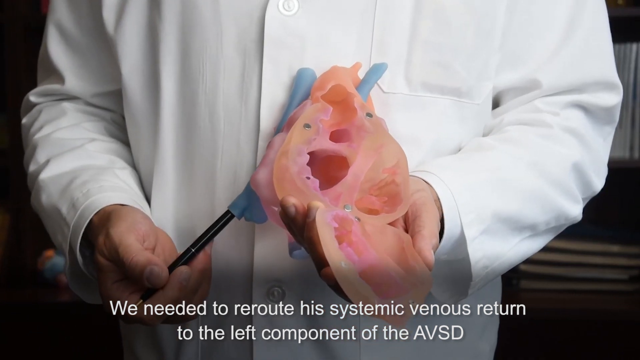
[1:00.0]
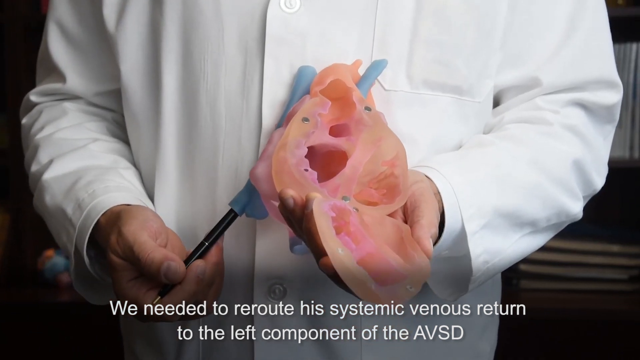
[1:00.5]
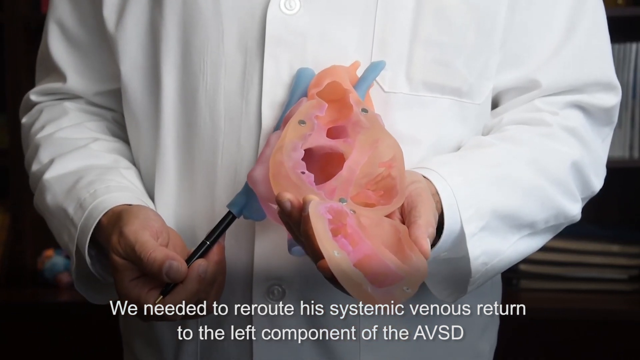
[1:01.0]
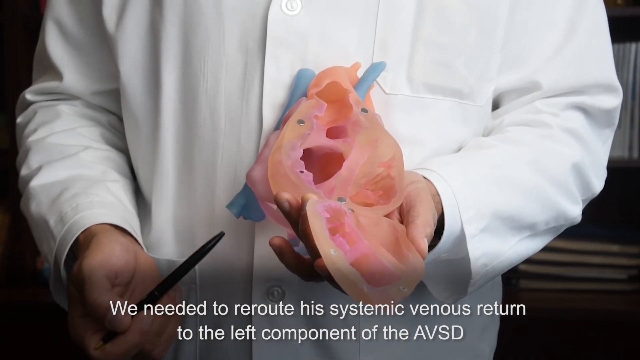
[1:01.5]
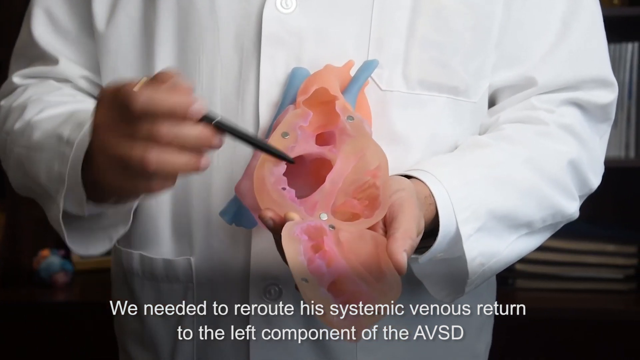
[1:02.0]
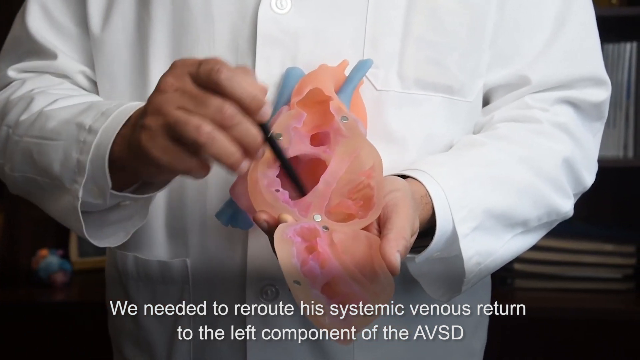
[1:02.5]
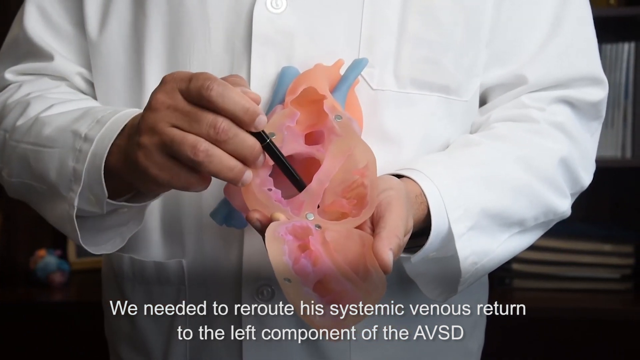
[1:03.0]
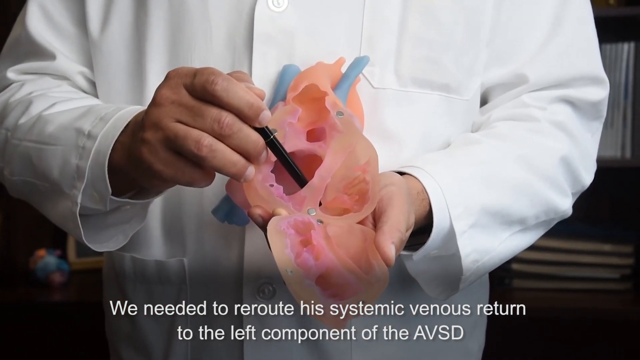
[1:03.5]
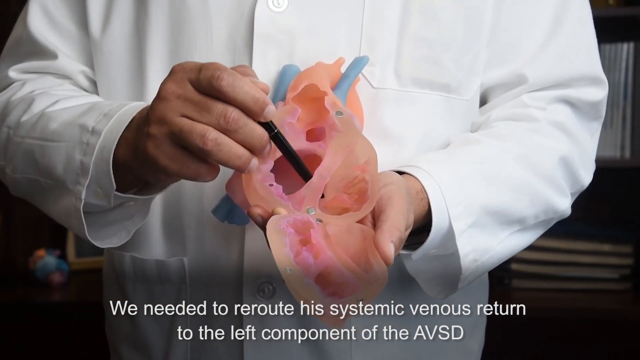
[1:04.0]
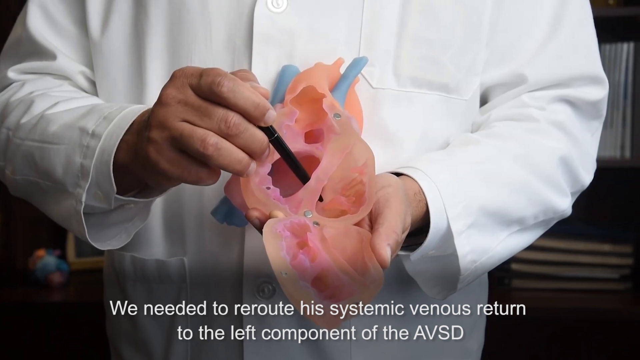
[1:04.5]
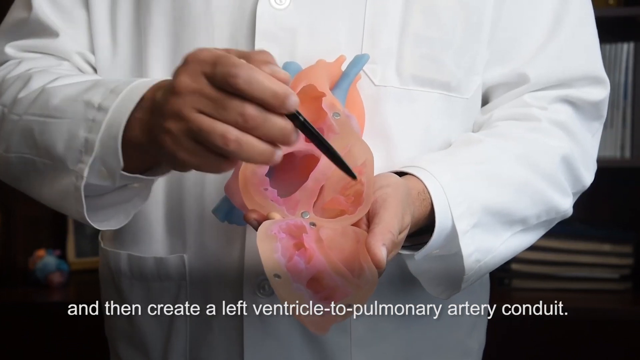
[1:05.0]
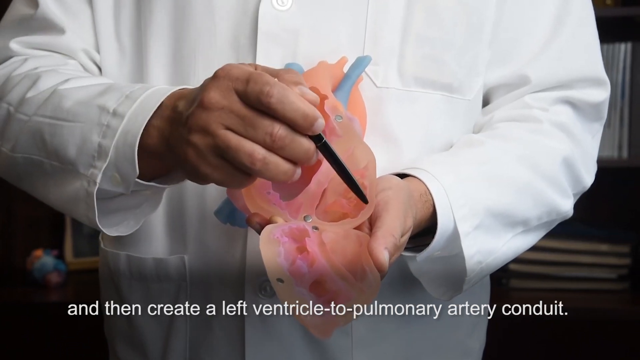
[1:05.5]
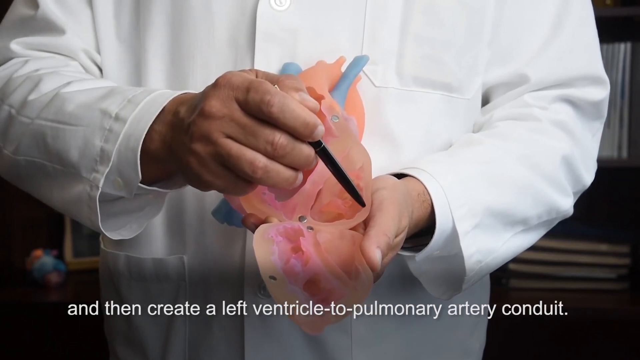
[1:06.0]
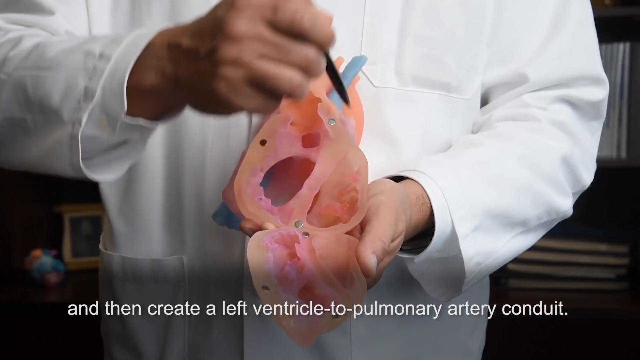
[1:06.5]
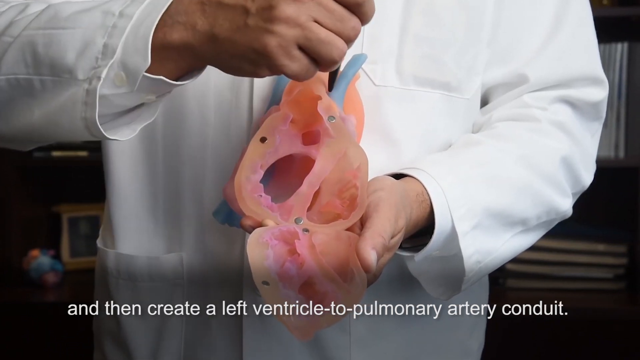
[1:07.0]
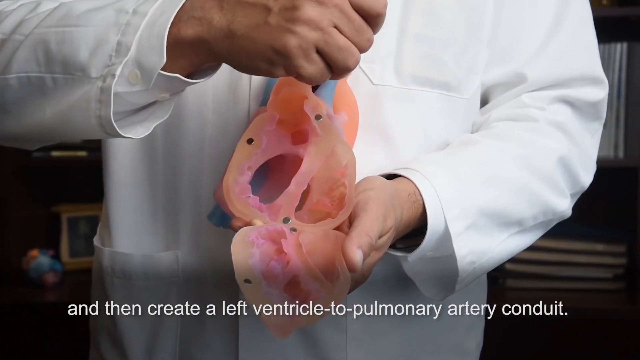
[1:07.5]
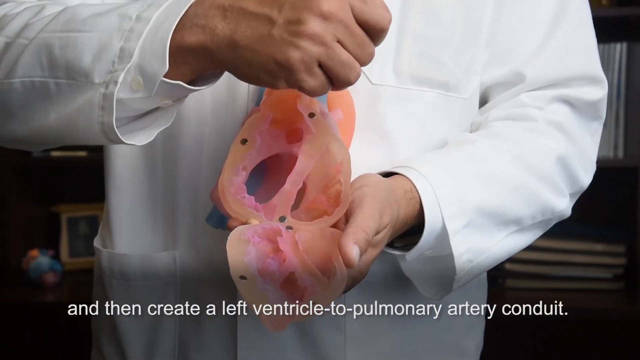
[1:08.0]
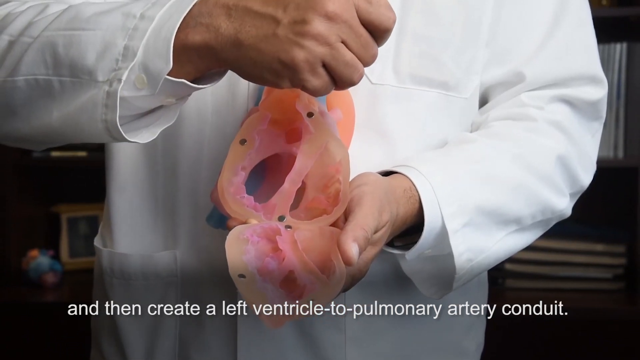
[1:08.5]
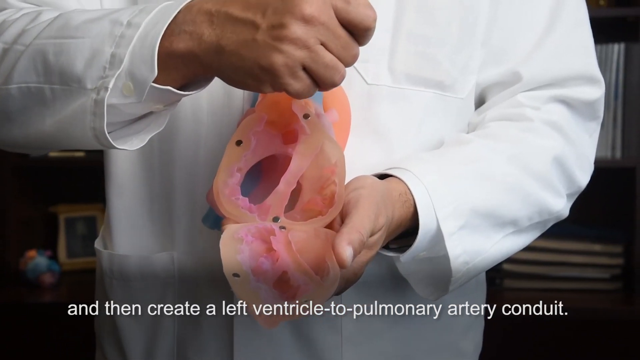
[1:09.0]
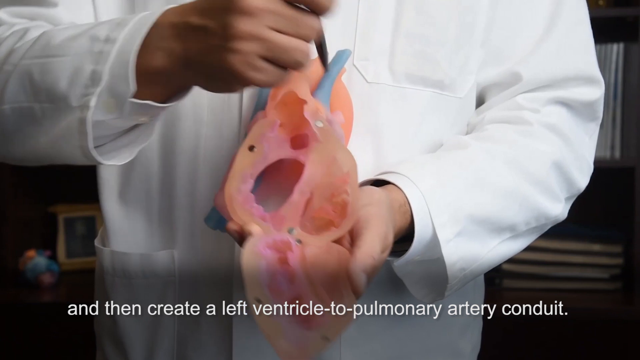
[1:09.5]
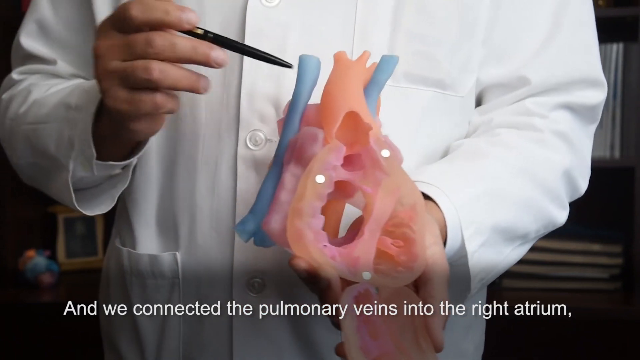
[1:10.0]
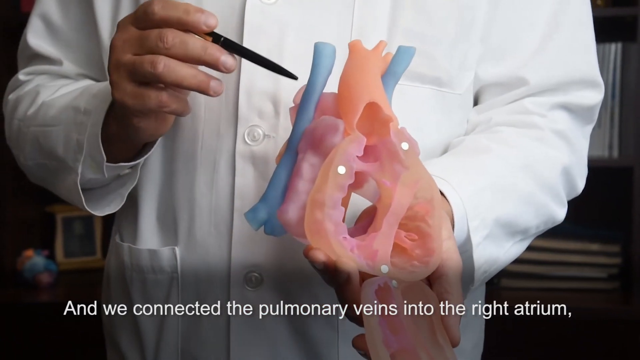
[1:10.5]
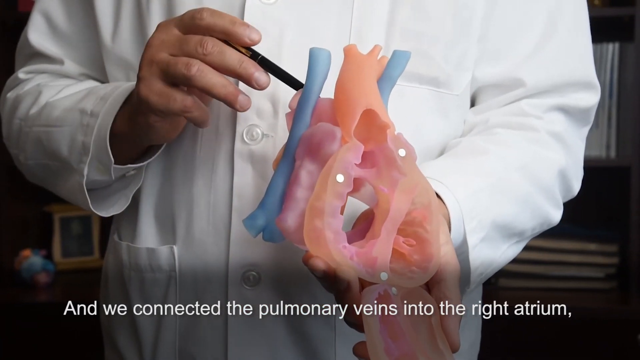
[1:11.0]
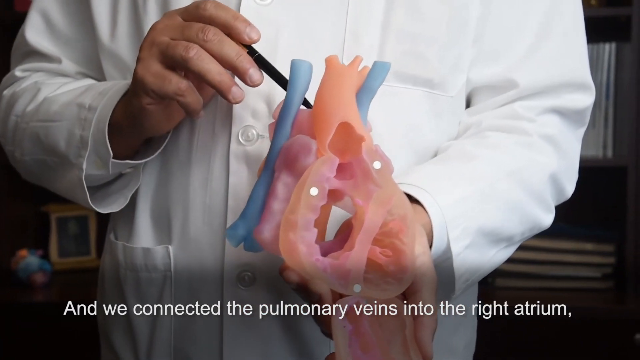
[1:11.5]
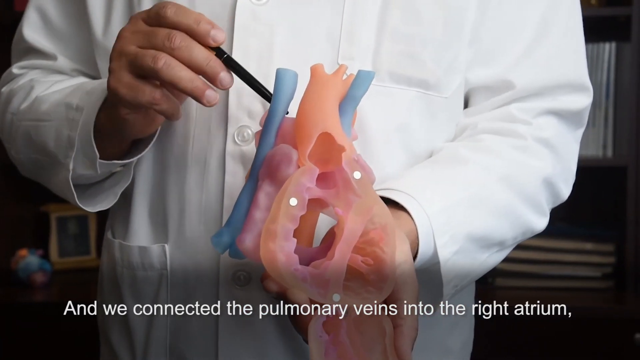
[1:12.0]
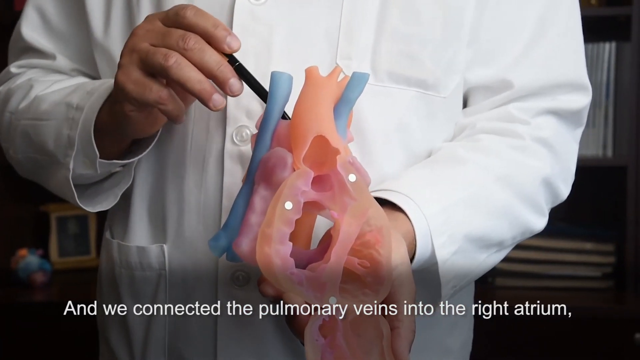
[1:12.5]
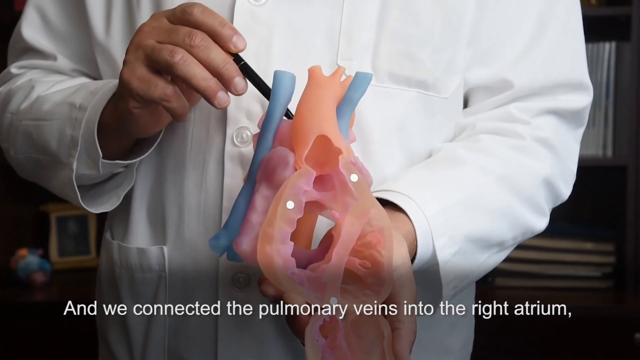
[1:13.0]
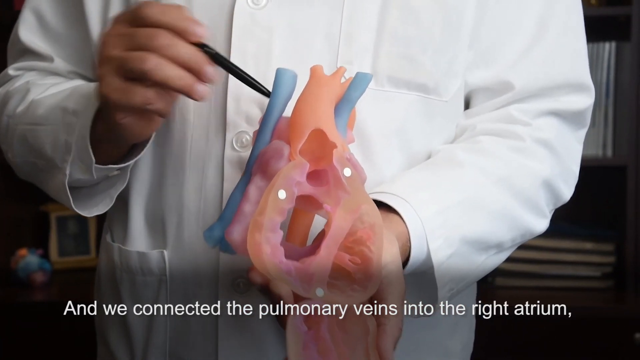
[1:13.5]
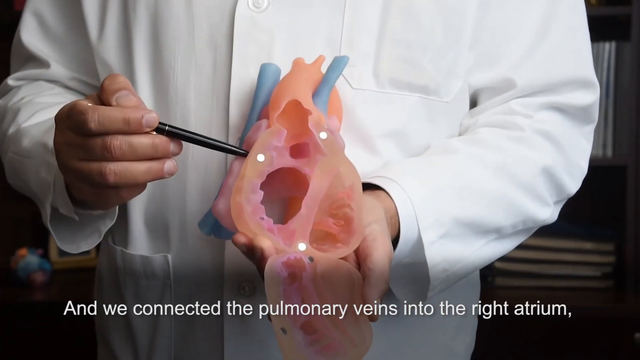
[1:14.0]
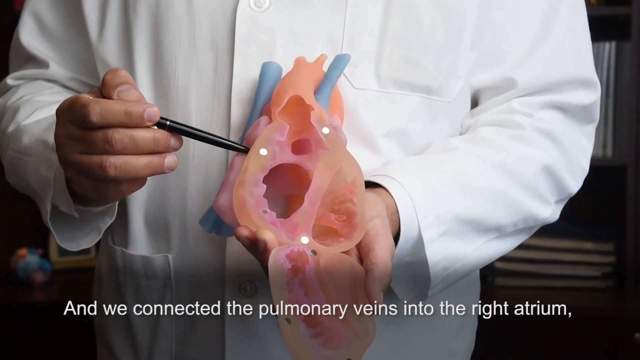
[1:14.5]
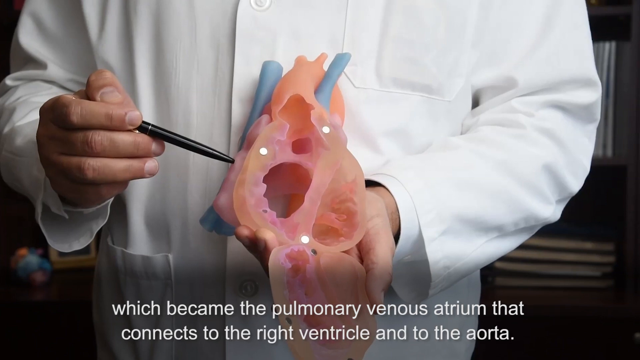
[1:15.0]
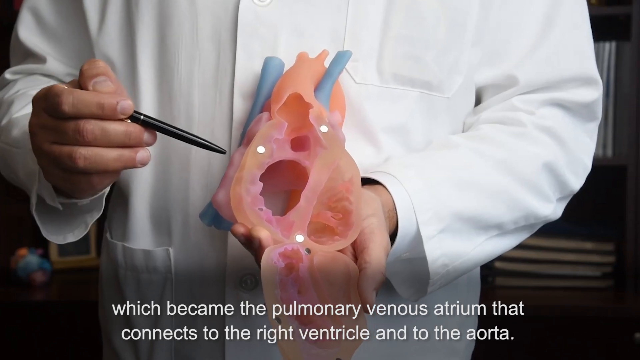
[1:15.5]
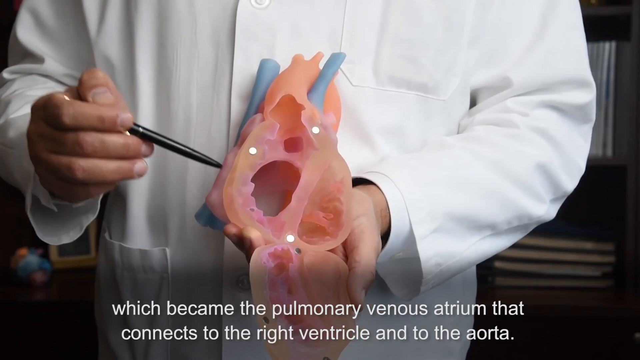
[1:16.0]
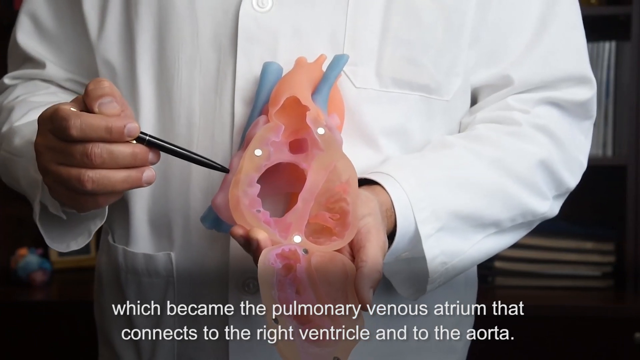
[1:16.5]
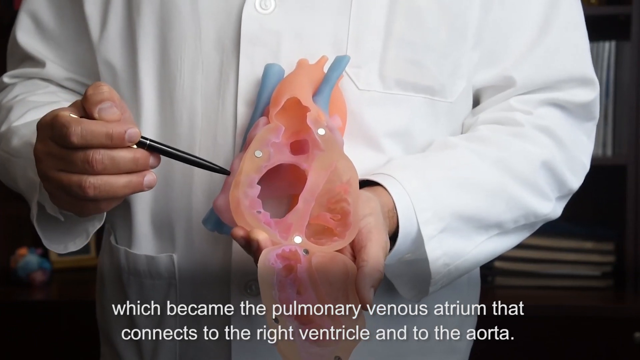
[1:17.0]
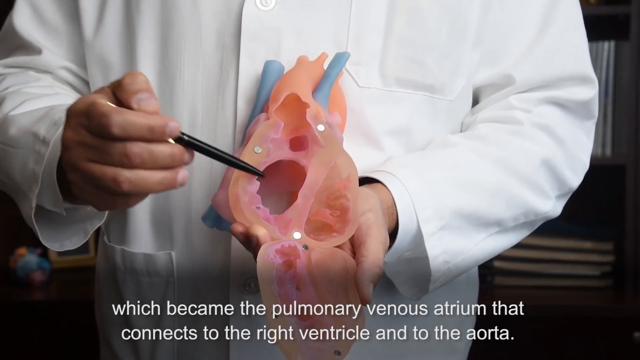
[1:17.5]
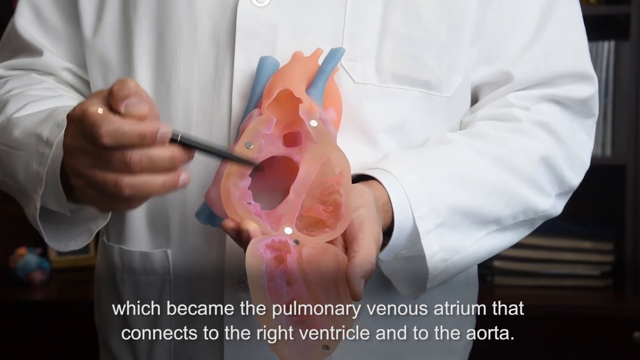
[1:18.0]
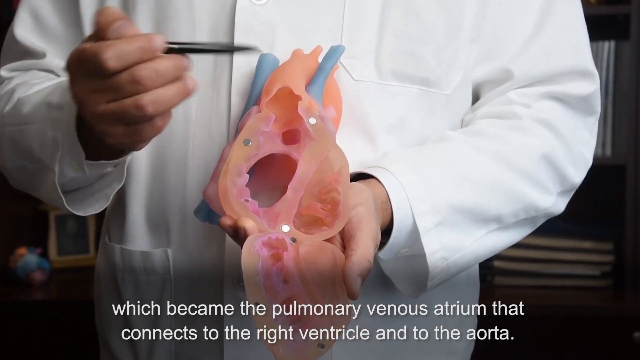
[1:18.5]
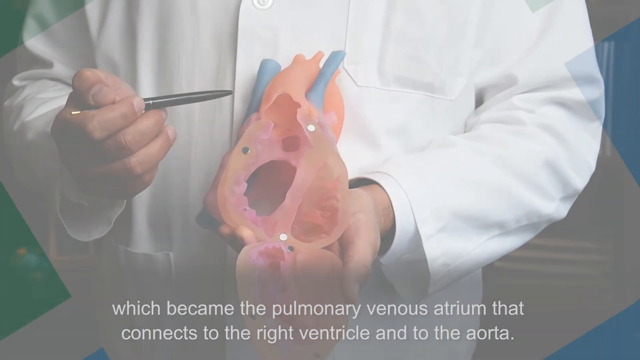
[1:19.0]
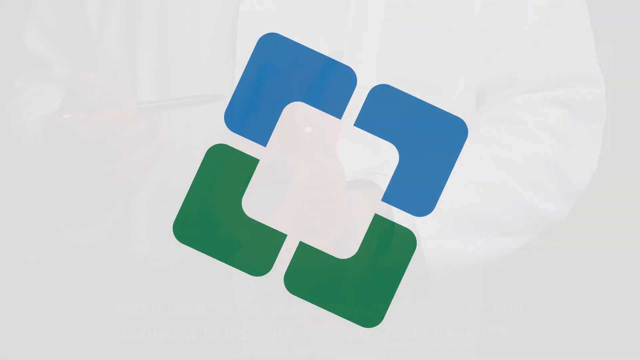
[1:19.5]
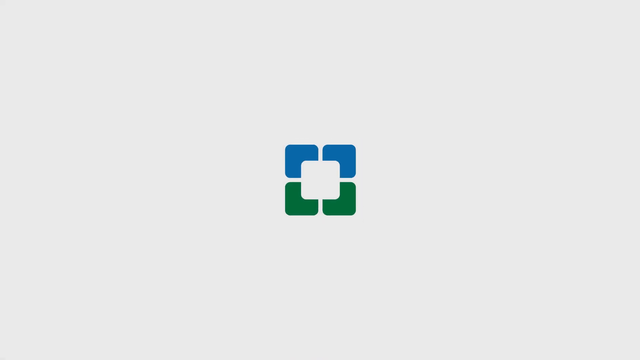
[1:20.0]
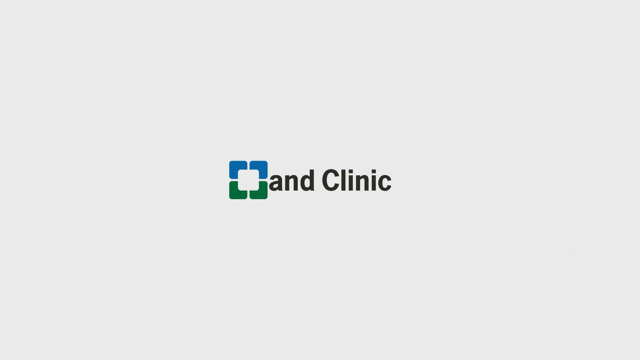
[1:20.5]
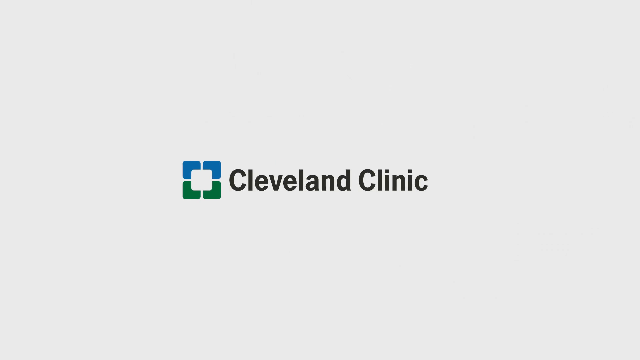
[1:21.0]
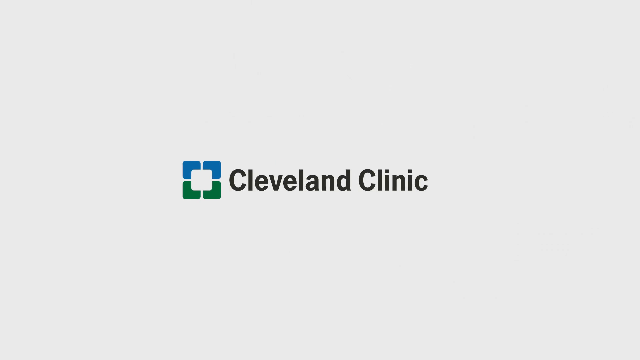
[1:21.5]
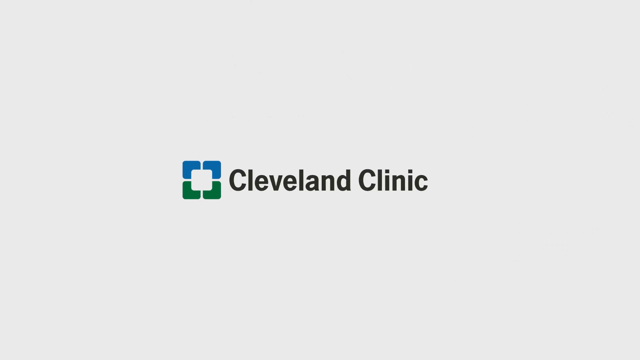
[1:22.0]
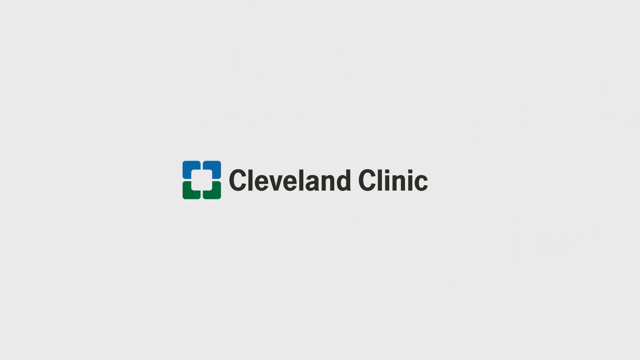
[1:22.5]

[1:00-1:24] The video describes the procedure: rerouting the patient's systemic venous return to the left component of the AVSD, creating a left ventricle to pulmonary artery conduit, and directing the pulmonary veins into the right atrium, which becomes the pulmonary venous atrium connecting to the right ventricle. The video shows the process for a patient suffering from a heart condition.